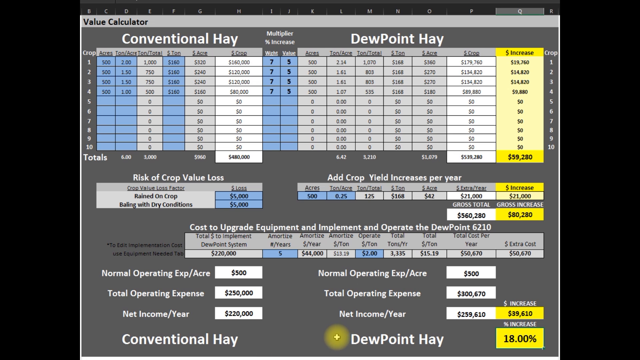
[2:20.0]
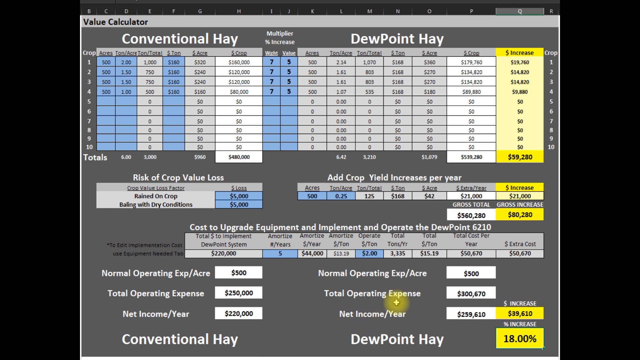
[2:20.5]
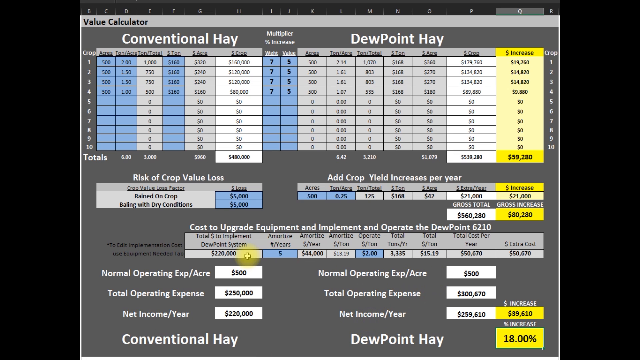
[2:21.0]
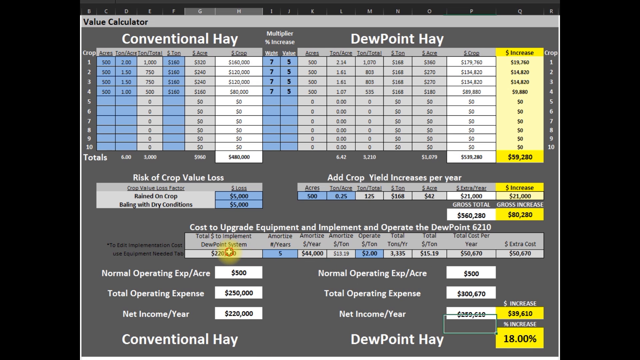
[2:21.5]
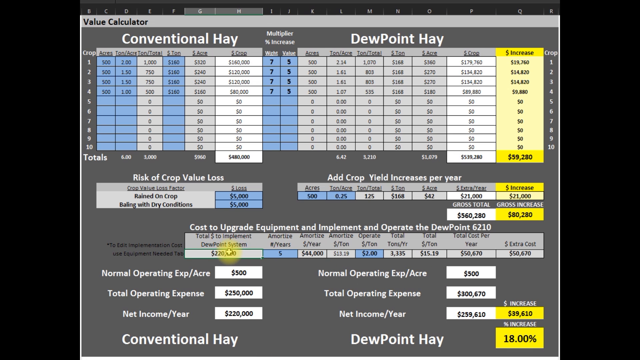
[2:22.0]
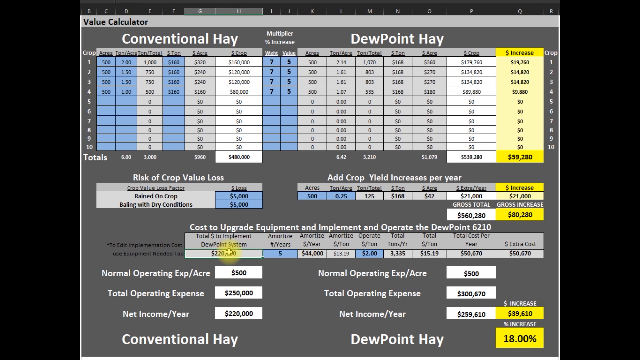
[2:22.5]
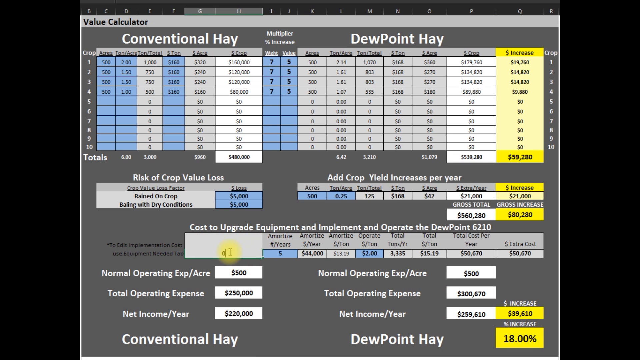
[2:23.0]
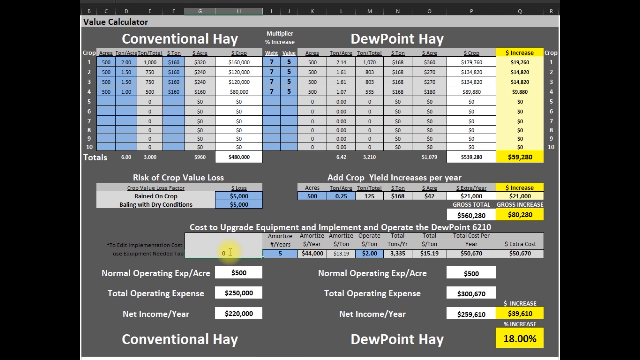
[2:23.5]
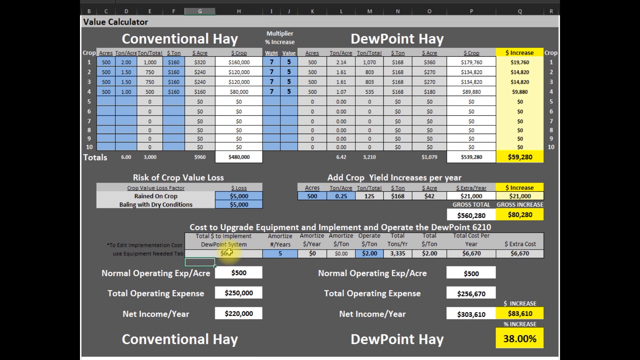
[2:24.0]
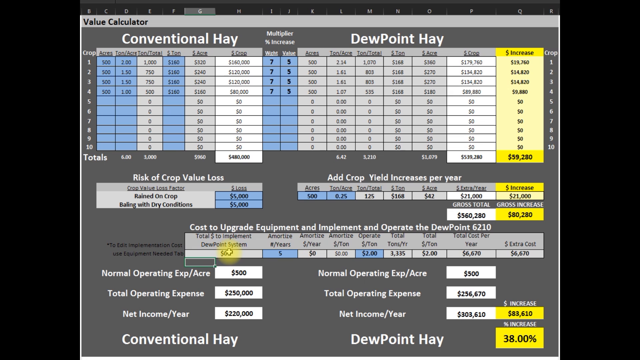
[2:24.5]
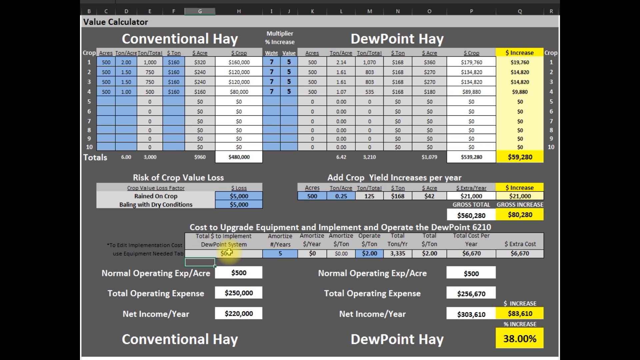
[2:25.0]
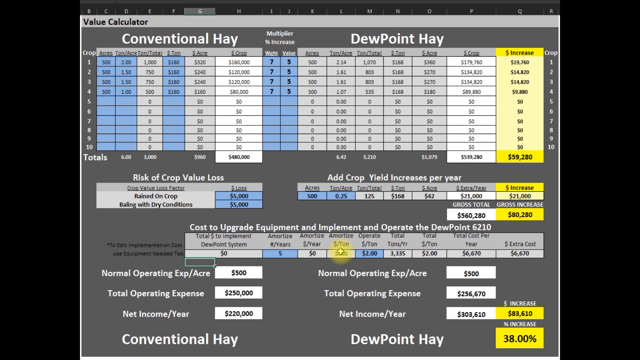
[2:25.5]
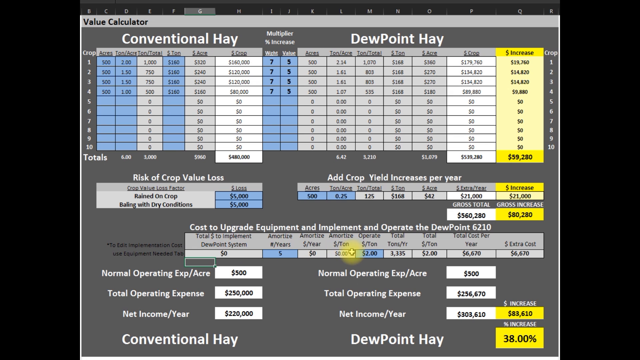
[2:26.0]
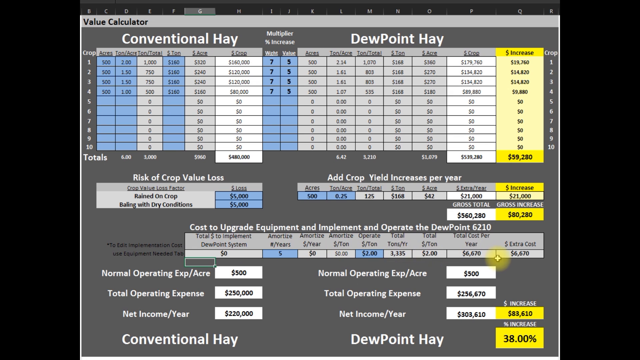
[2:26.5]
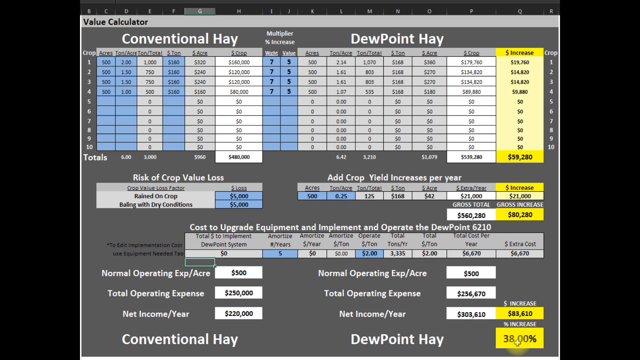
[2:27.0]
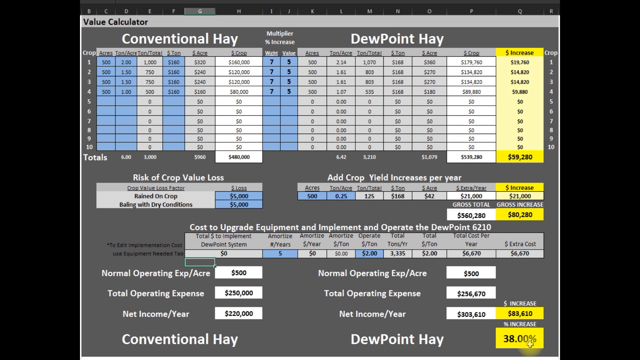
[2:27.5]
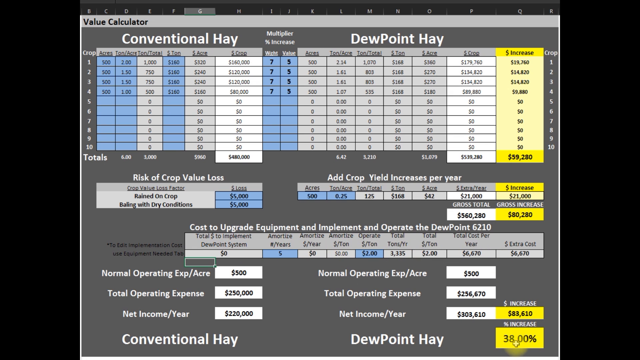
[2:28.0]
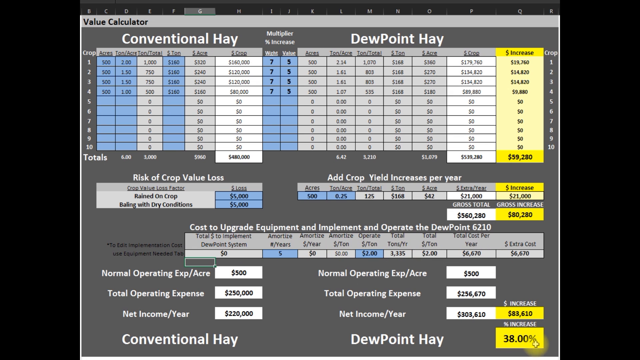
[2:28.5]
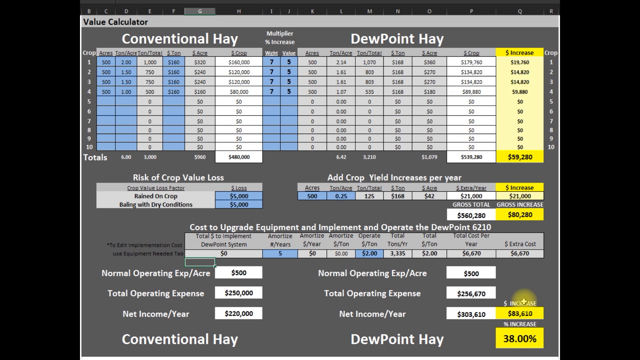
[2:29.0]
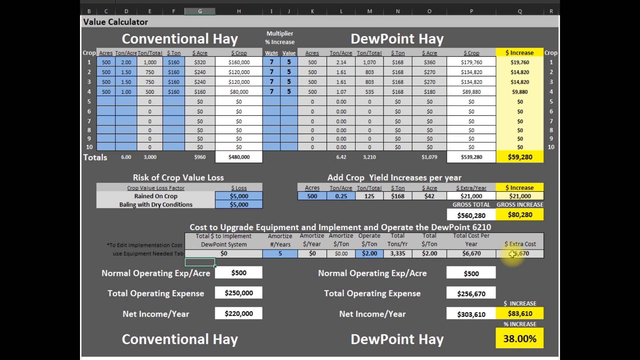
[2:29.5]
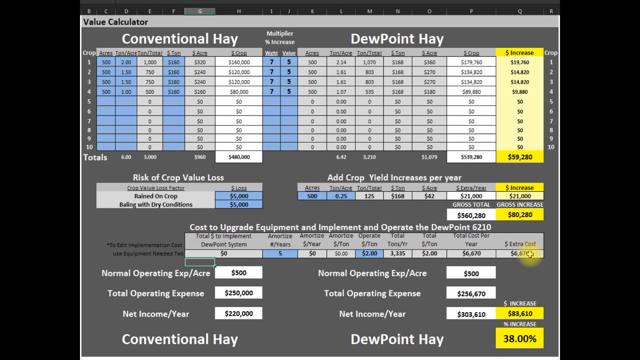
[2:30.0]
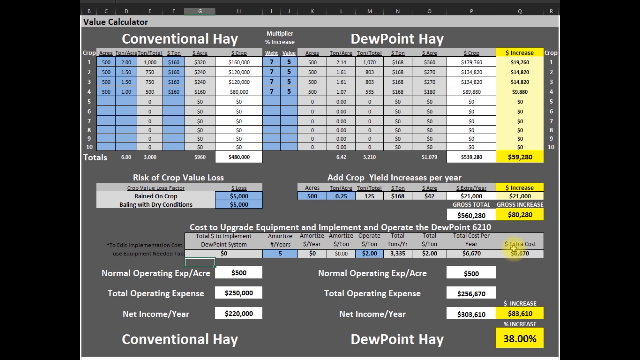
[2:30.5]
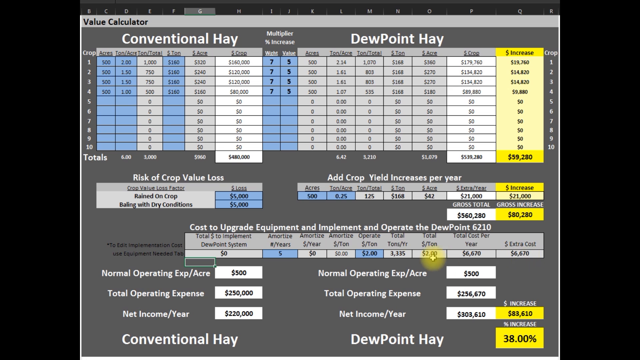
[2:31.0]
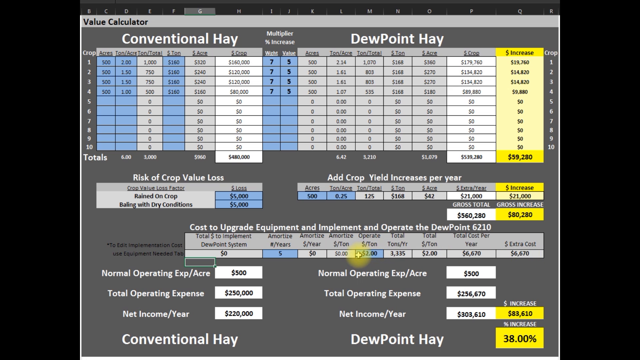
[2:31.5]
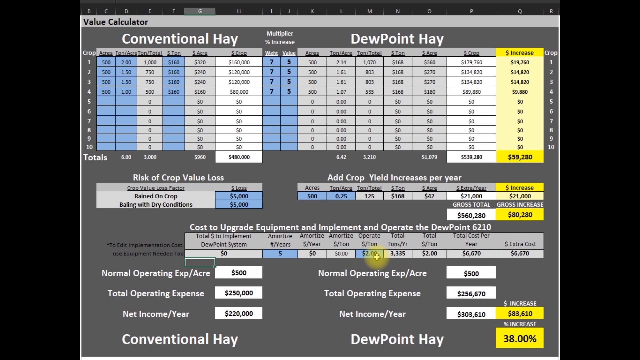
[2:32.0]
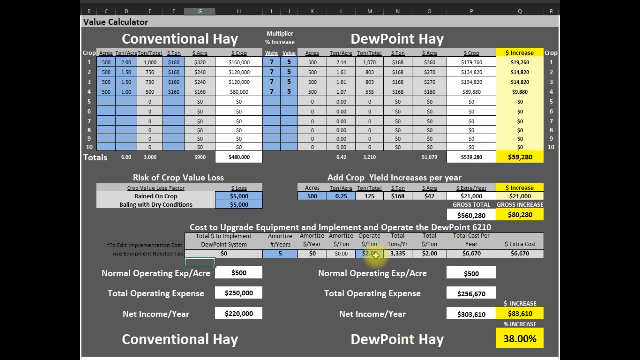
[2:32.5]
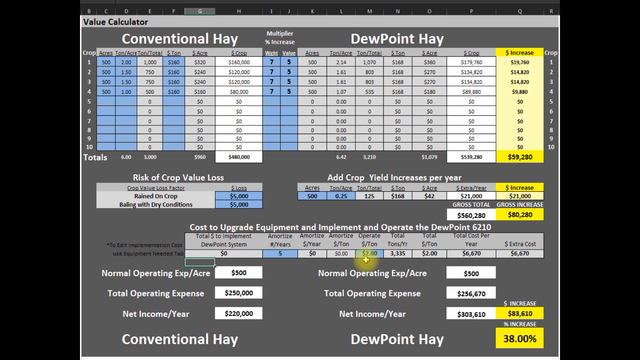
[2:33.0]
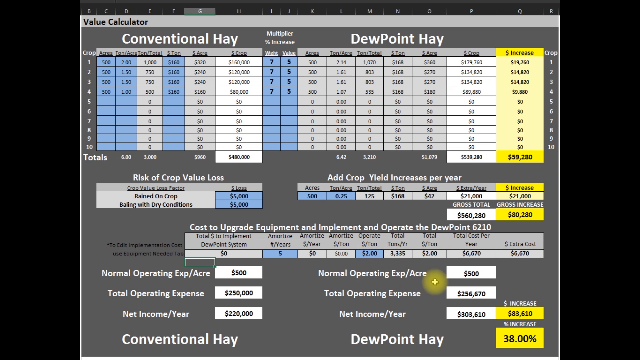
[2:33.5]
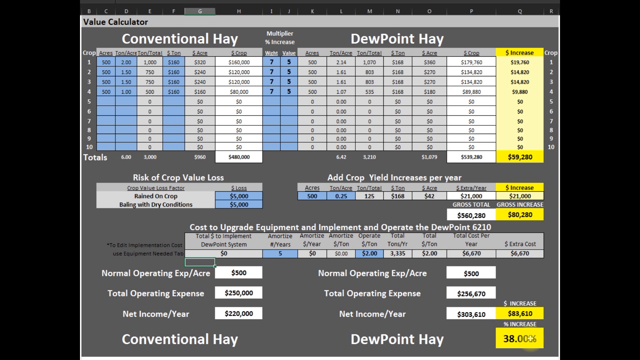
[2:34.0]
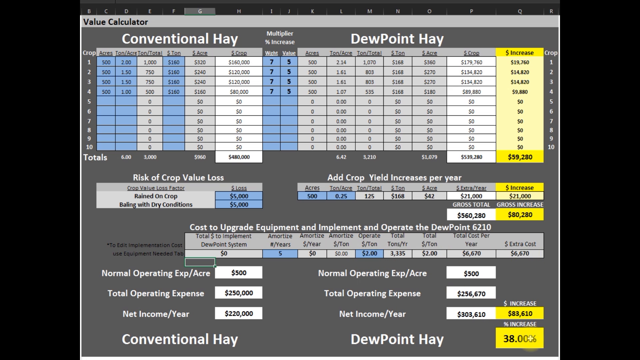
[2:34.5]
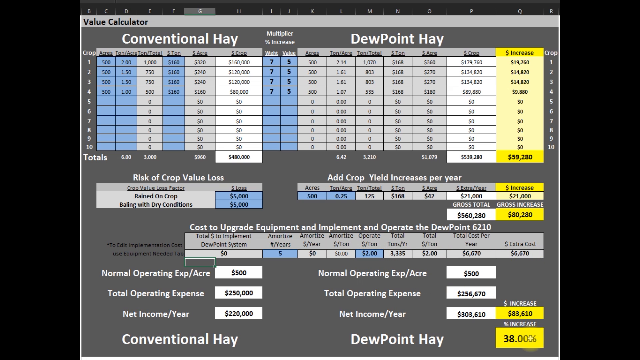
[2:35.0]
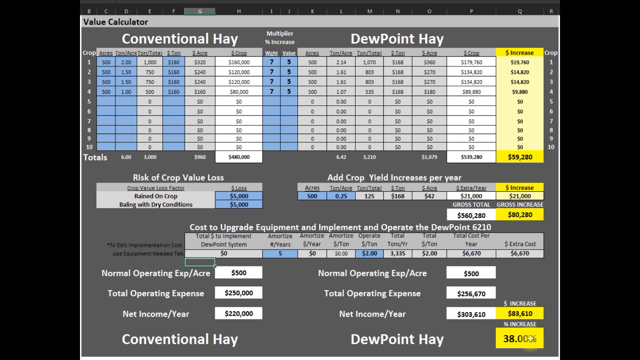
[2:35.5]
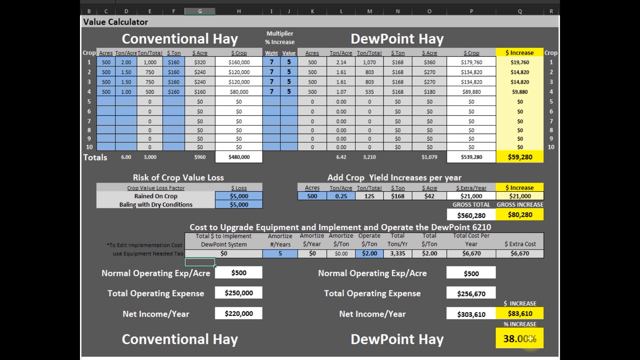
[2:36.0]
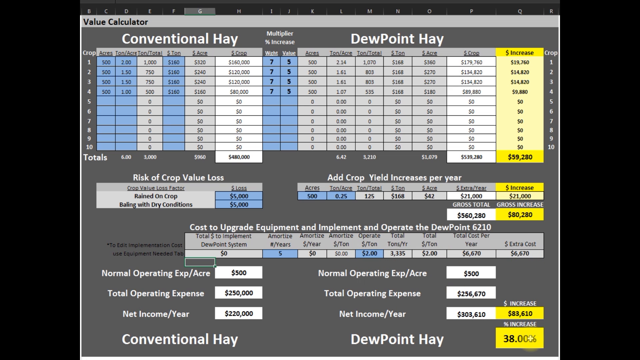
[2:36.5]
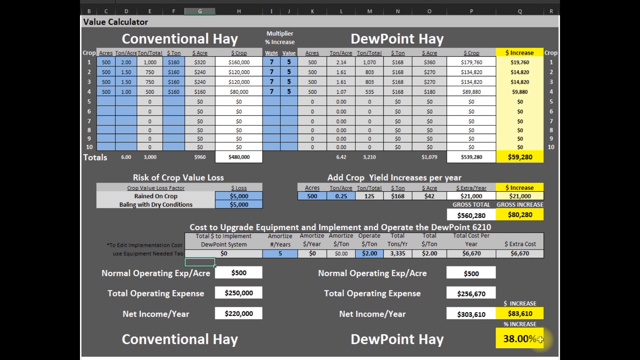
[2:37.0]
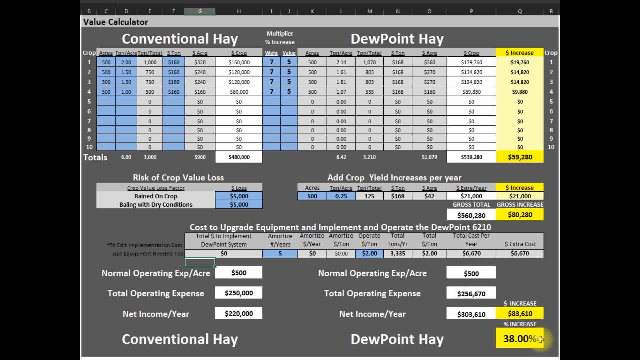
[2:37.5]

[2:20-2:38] The sheet shows "value calculator" in black, apparently its name. It looks very similar to Excel in function, possibly a Google Sheet. The mouse cursor is a small white cross surrounded by a yellow circle. The person moves all over the sheet, going to an area on the right side and then back up to "cost to upgrade equipment and implement and operate", moving around mostly on the lower half of the sheet.